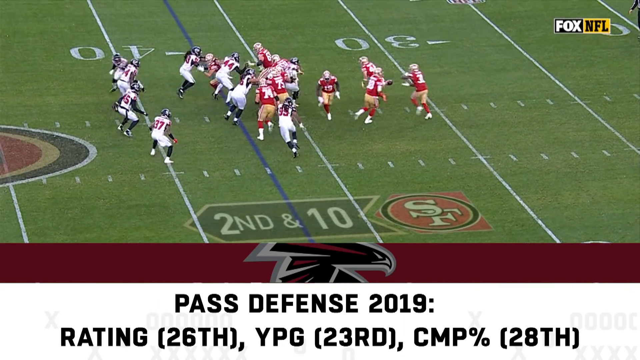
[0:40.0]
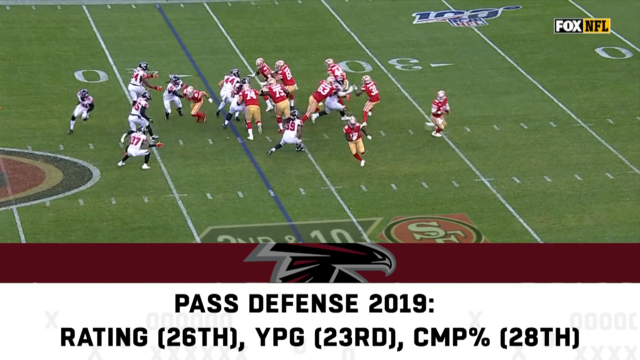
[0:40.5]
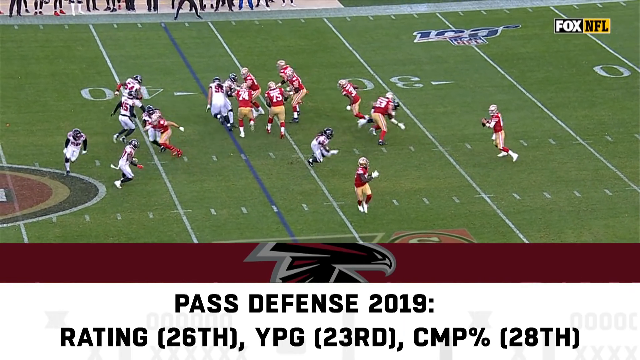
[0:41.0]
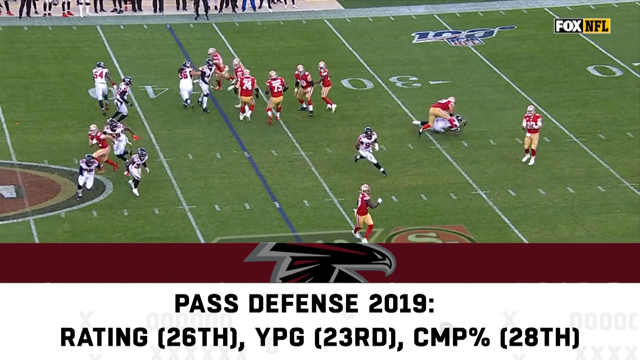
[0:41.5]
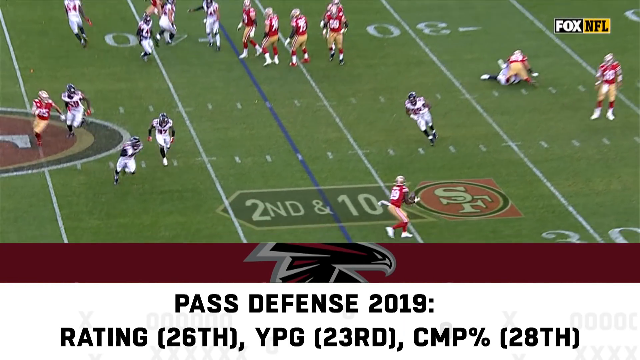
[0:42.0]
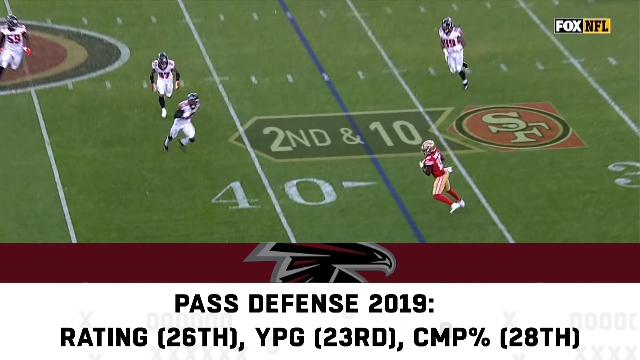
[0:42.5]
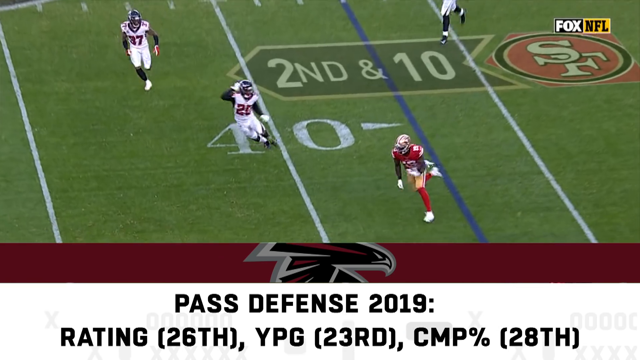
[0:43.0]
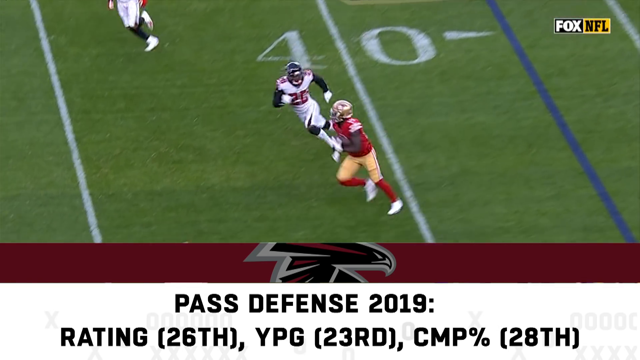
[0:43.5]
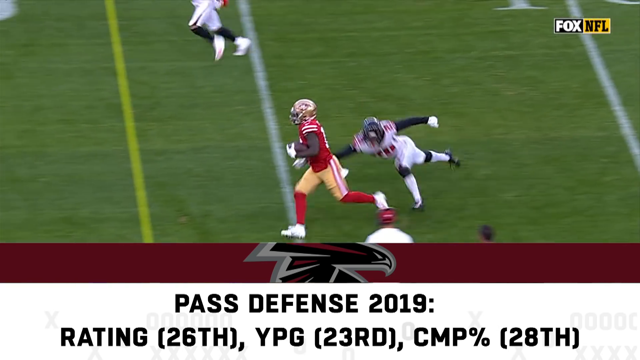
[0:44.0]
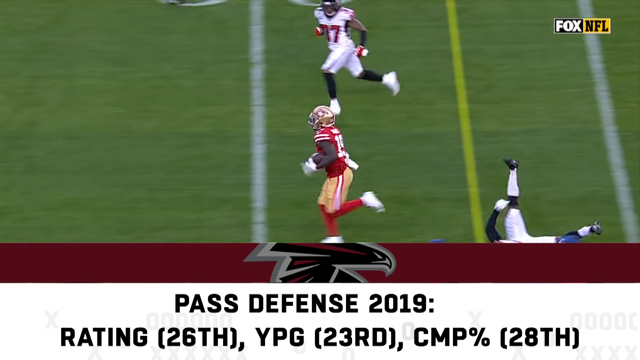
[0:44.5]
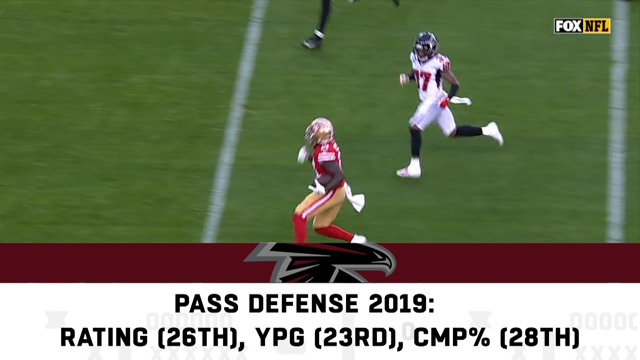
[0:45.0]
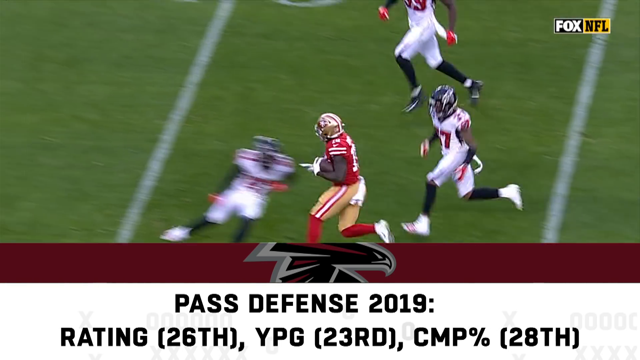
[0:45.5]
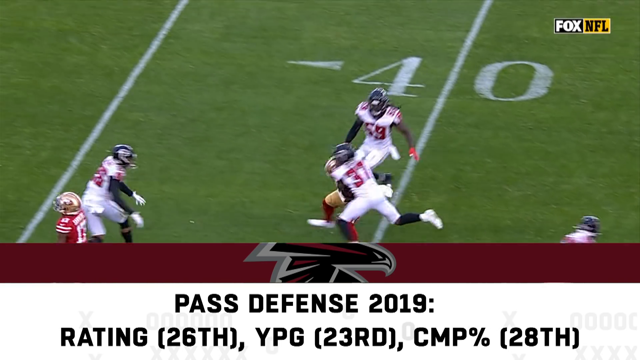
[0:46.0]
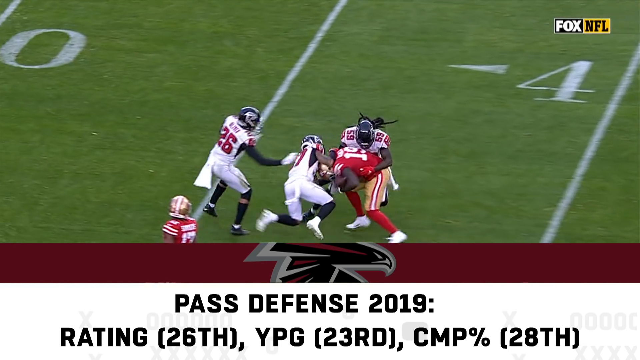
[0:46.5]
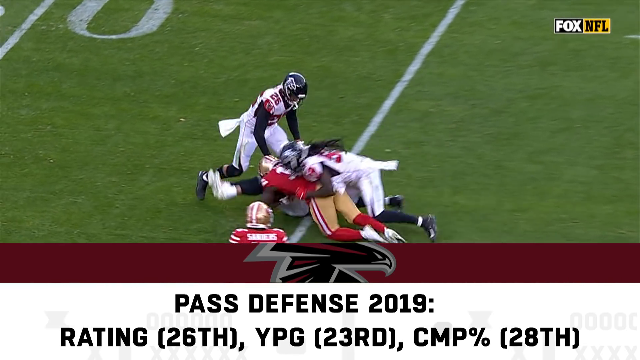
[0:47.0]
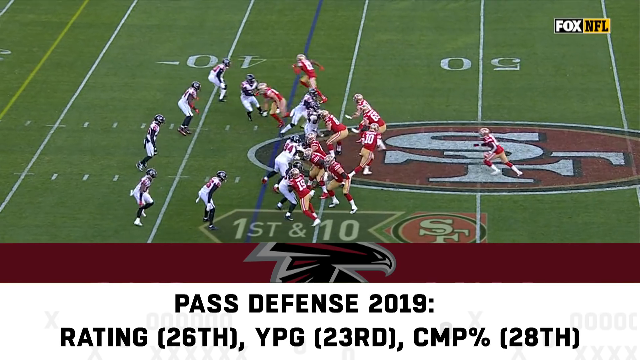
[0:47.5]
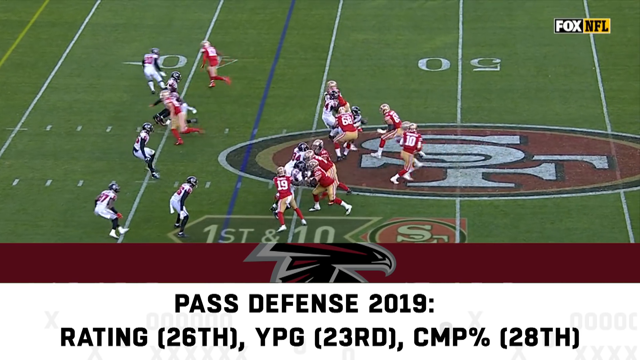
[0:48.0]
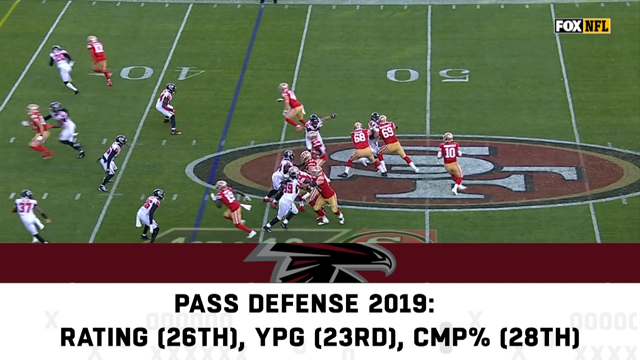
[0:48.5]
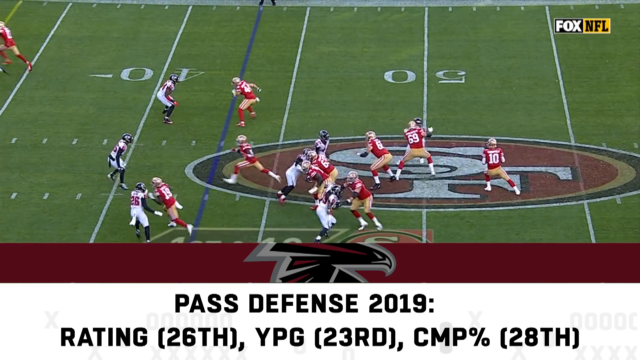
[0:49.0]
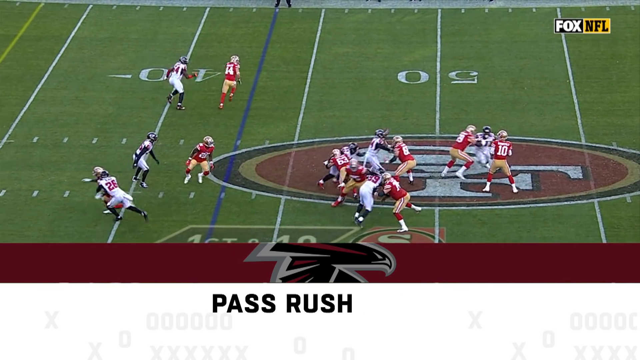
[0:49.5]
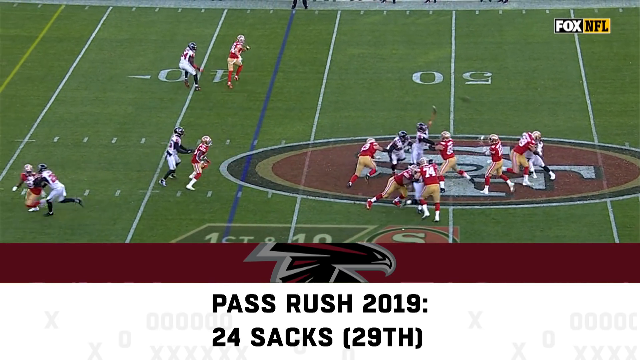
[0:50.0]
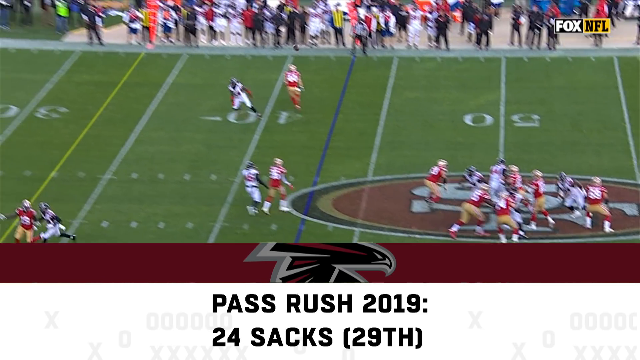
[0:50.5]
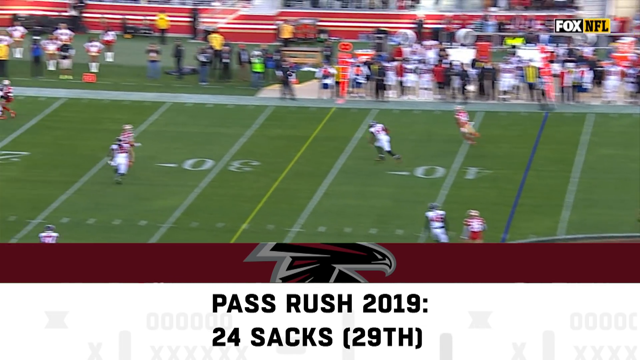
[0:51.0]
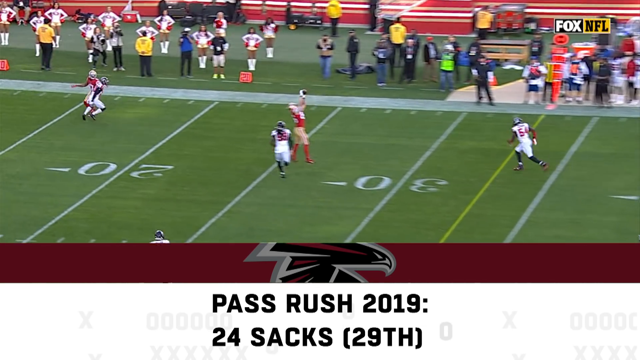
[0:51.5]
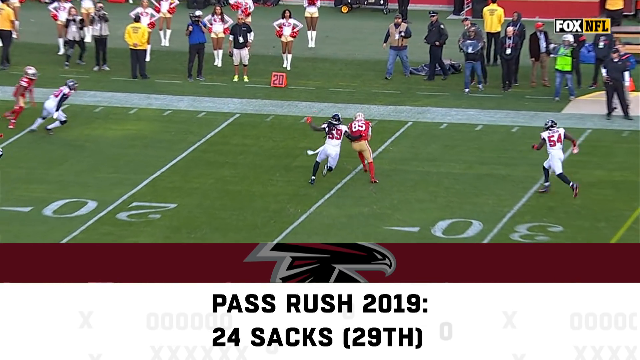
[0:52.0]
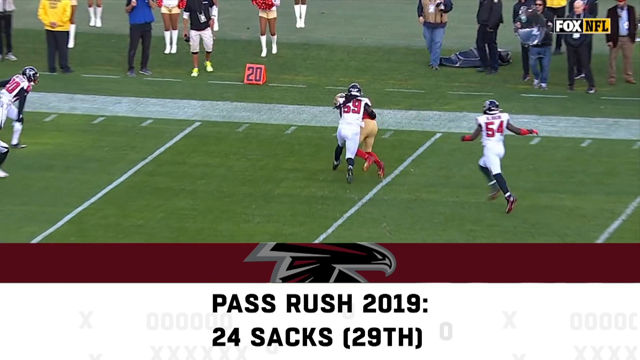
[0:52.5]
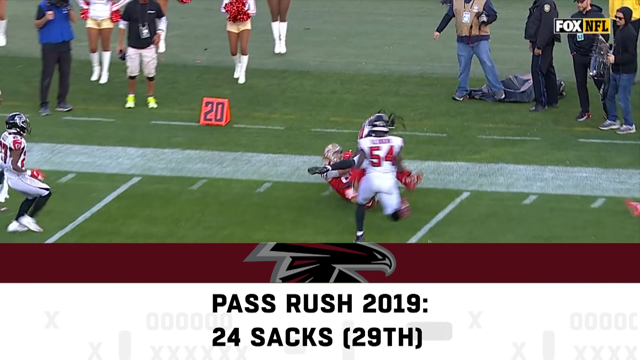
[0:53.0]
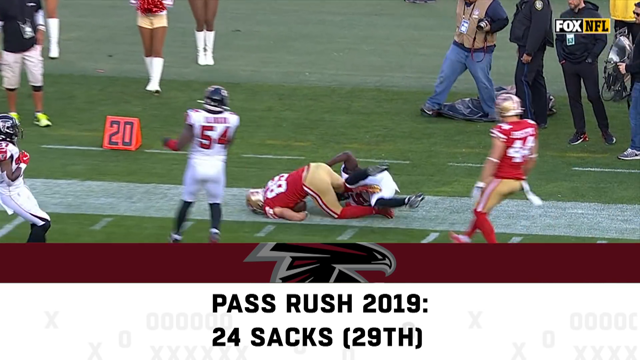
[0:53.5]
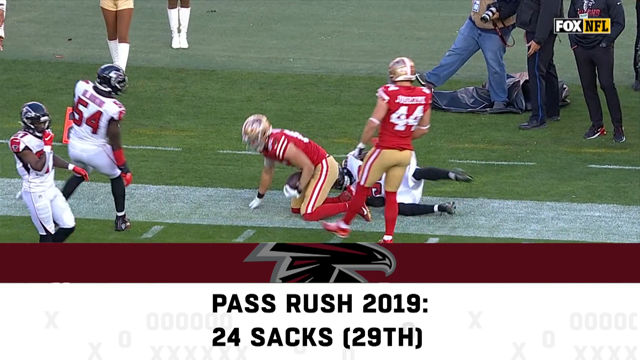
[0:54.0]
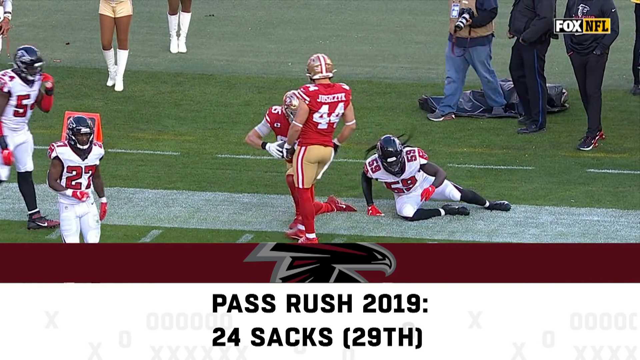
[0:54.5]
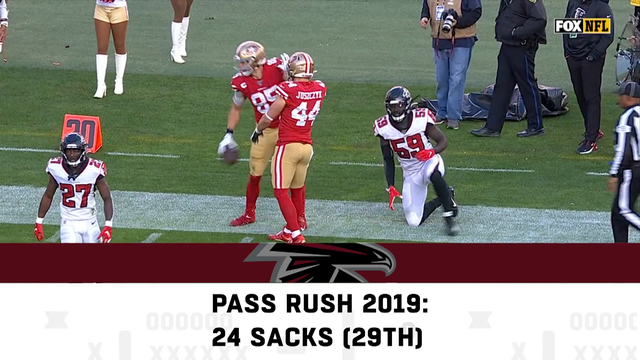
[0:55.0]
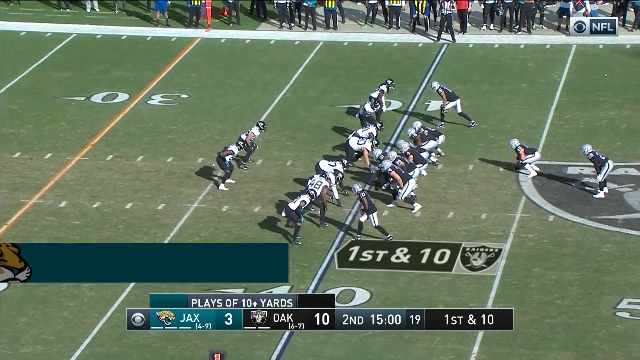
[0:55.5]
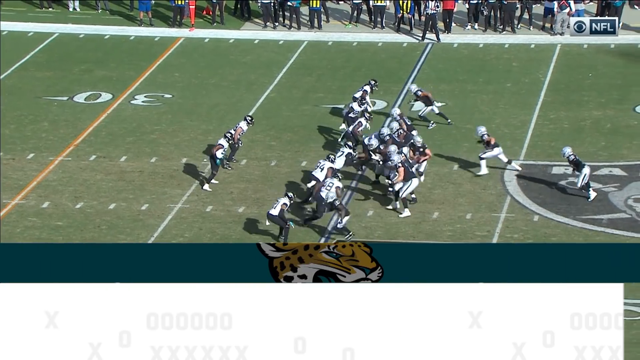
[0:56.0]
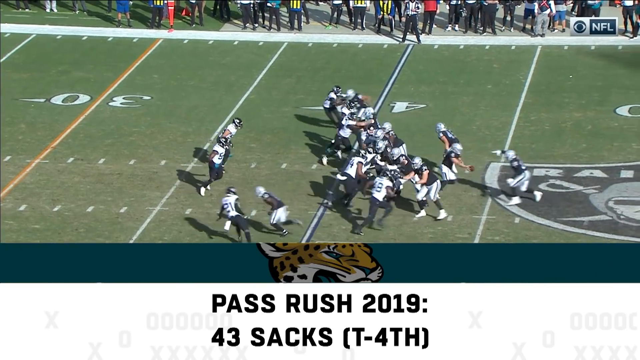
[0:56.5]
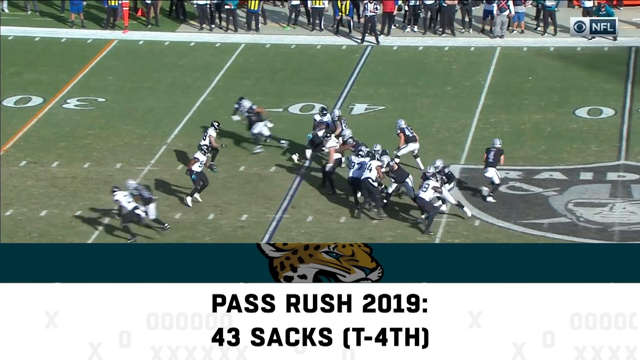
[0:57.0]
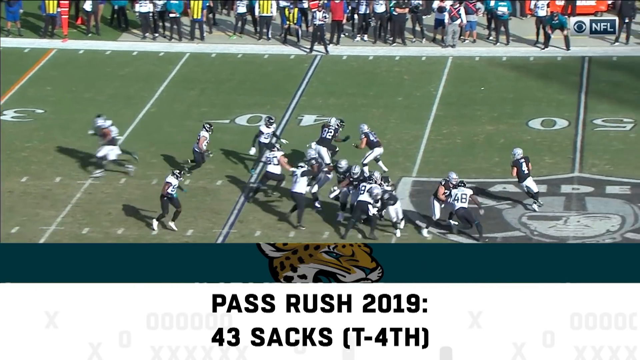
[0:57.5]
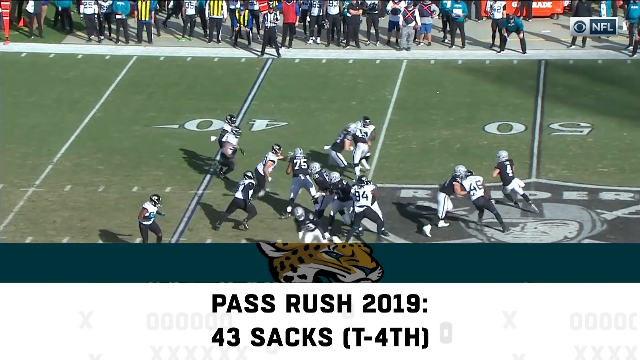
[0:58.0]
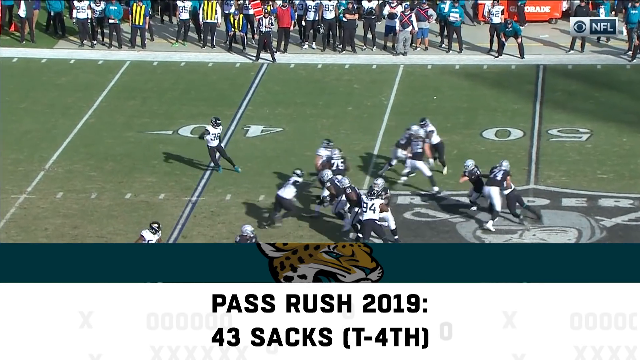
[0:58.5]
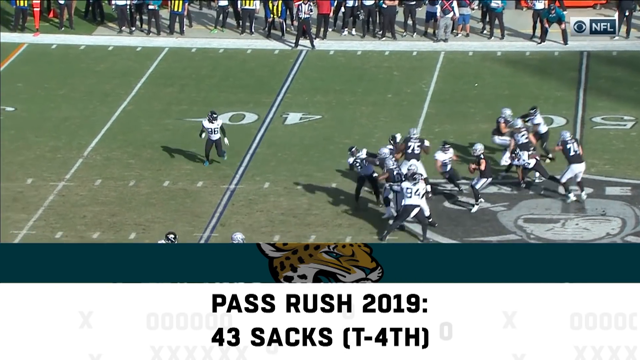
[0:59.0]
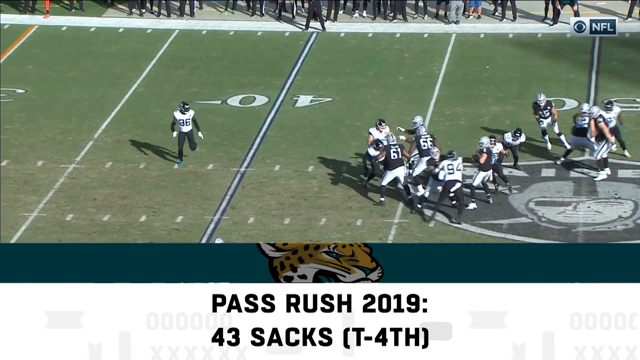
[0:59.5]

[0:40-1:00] The San Francisco 49ers make a long run. After a fake handoff, the quarterback passes downfield to No. 85. The video switches straight back to the Oakland-Jacksonville game, where the Oakland quarterback, No. 4, is under pressure; he avoids one attempted sack, but two Jacksonville players envelop him and he goes down for a loss of yards. The 49ers then complete a short pass to a receiver with no one near him, who gets about 20 yards downfield after the catch before being tackled. The Fox NFL coverage uses fairly good camera angles, and the weather is pleasant in both games.